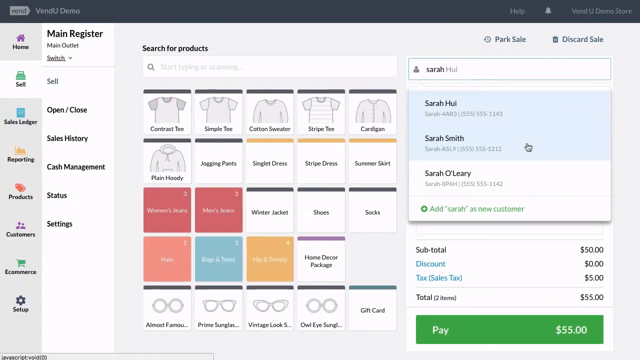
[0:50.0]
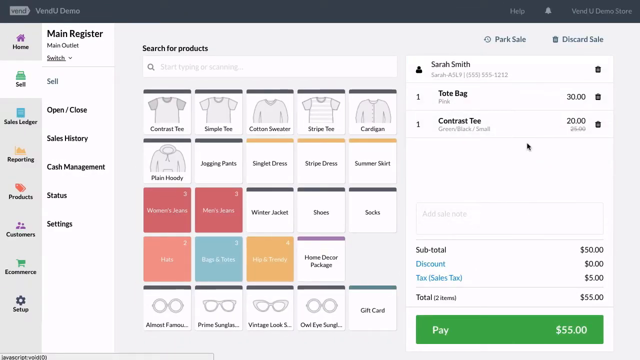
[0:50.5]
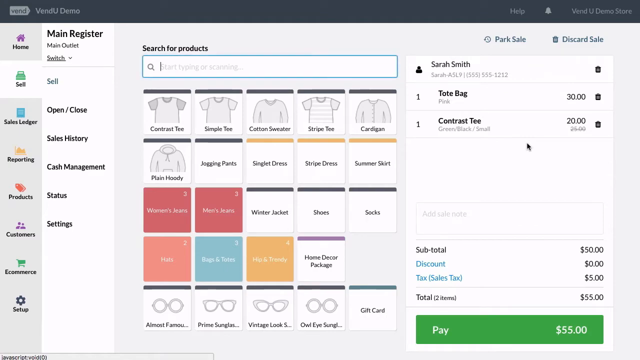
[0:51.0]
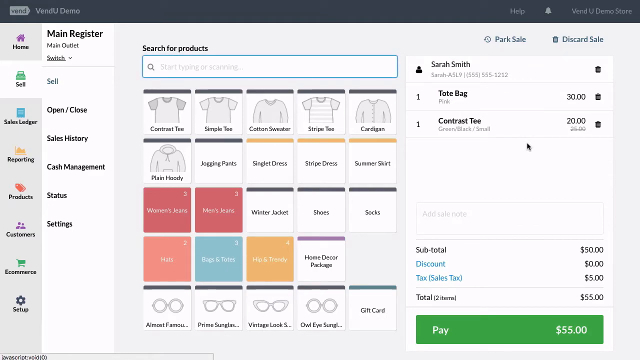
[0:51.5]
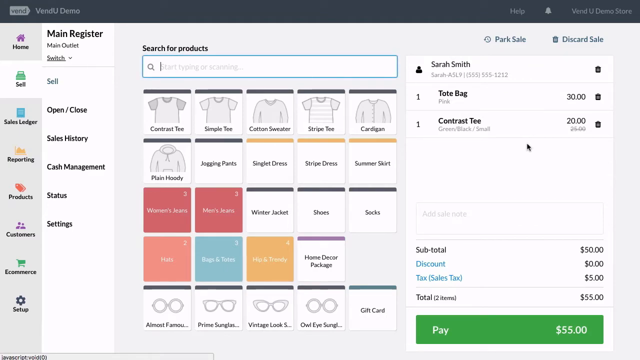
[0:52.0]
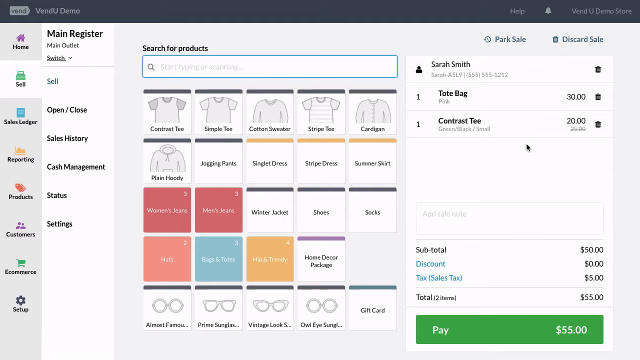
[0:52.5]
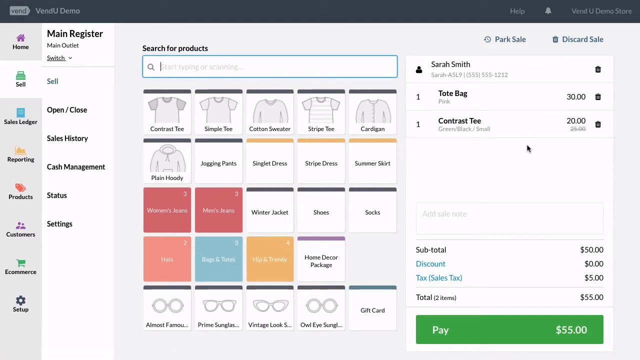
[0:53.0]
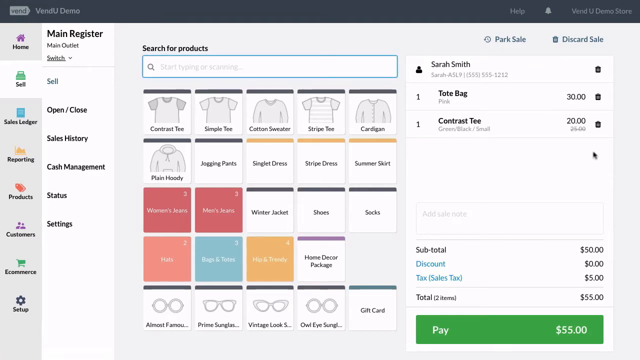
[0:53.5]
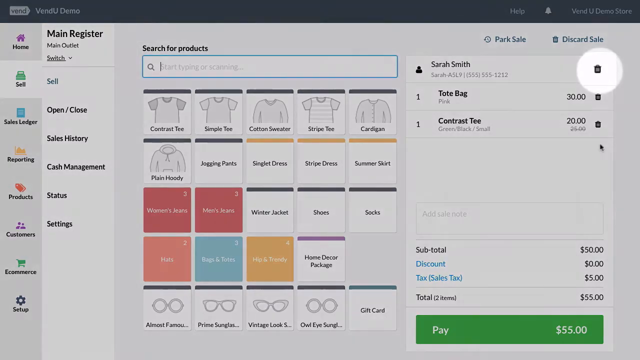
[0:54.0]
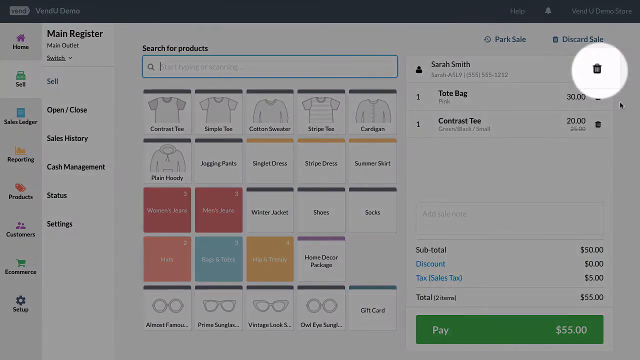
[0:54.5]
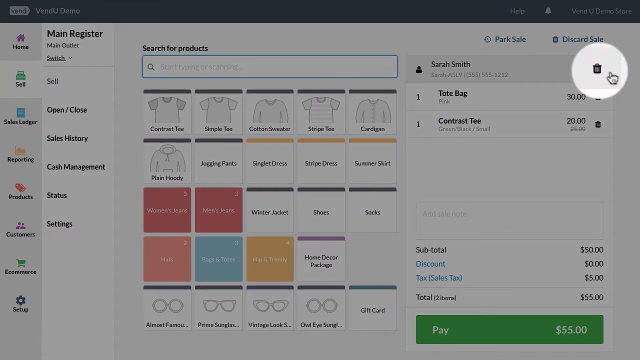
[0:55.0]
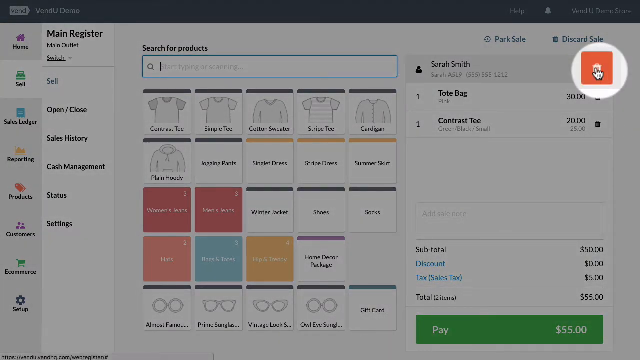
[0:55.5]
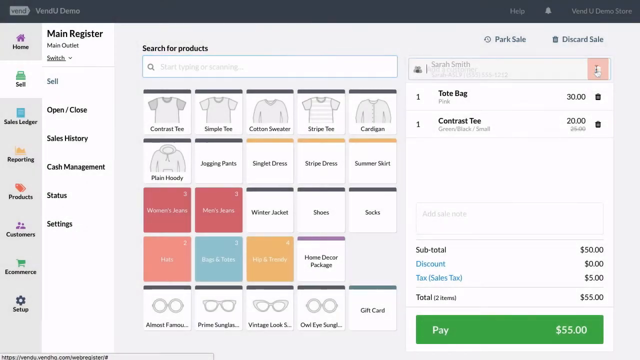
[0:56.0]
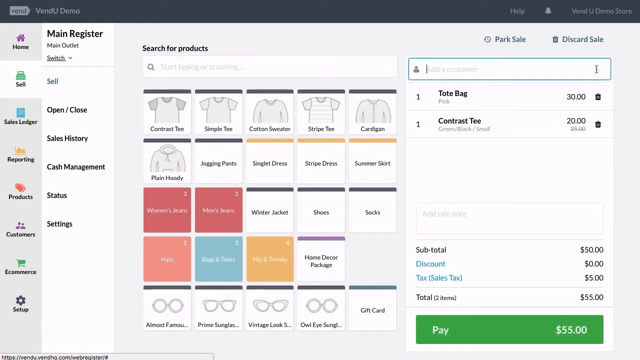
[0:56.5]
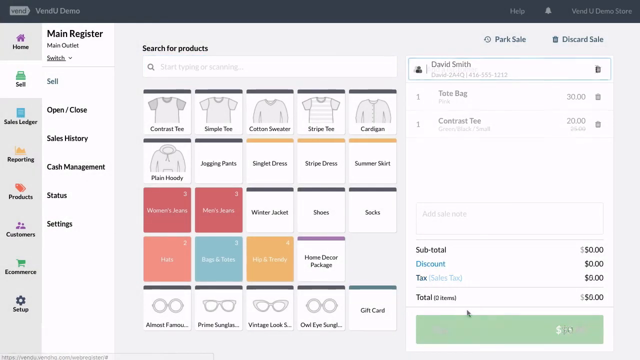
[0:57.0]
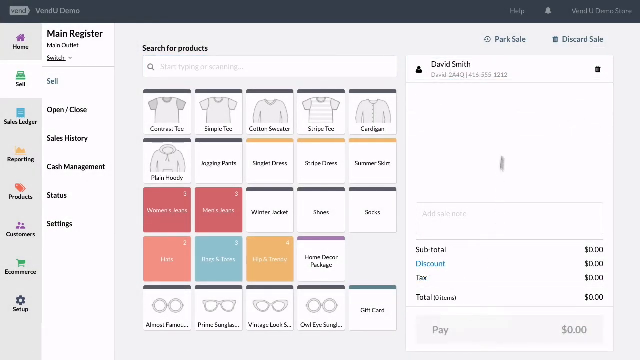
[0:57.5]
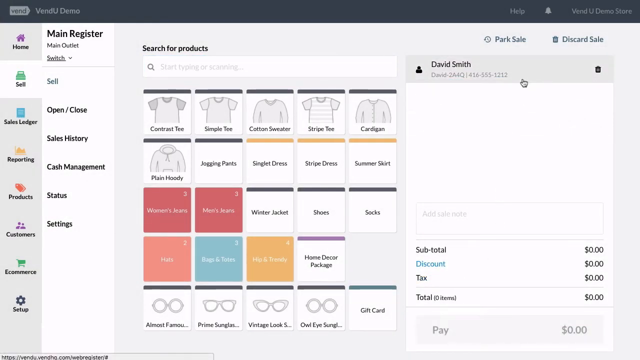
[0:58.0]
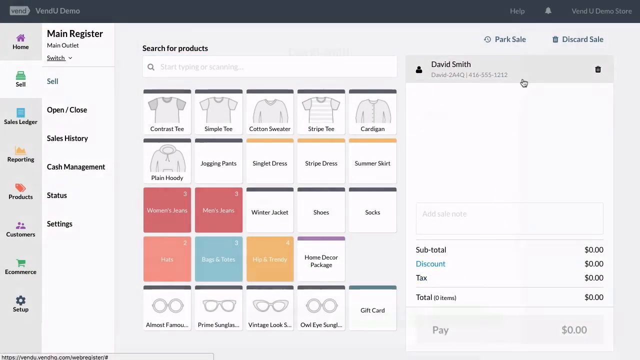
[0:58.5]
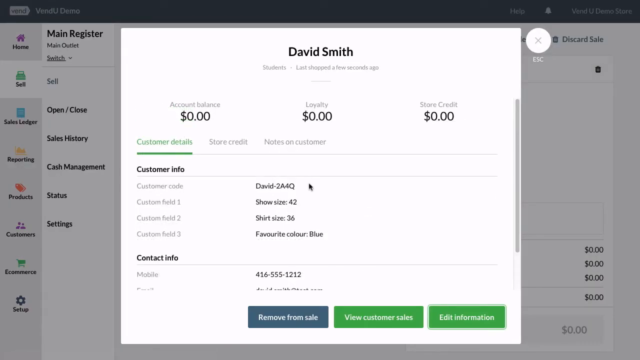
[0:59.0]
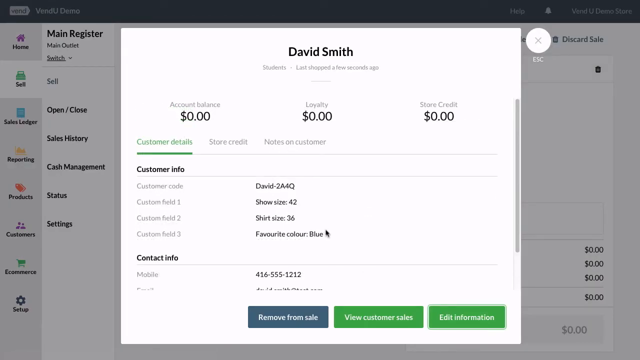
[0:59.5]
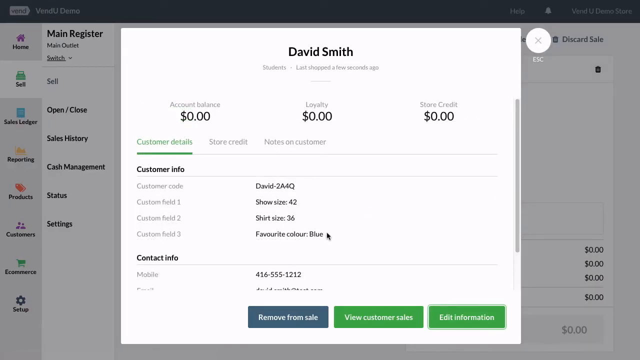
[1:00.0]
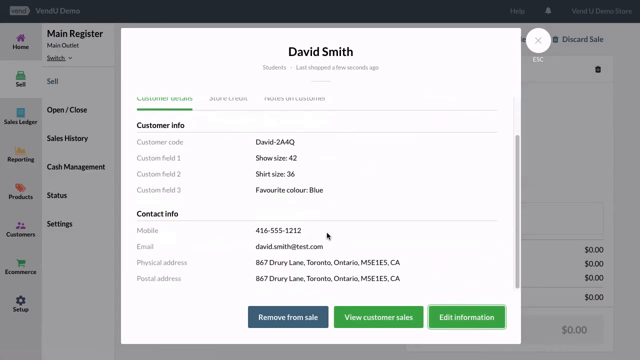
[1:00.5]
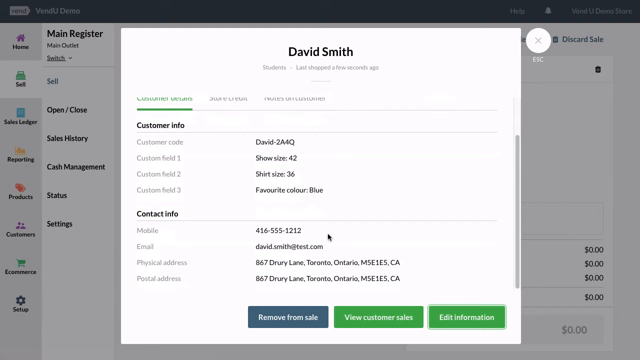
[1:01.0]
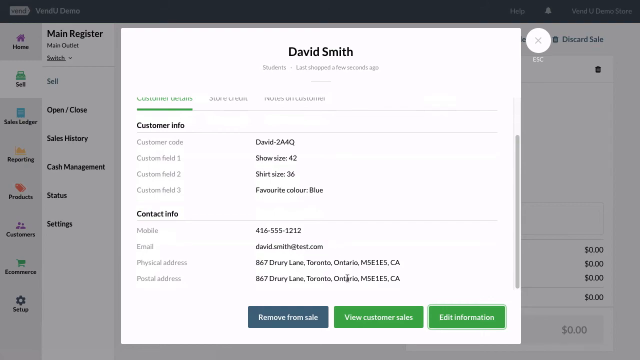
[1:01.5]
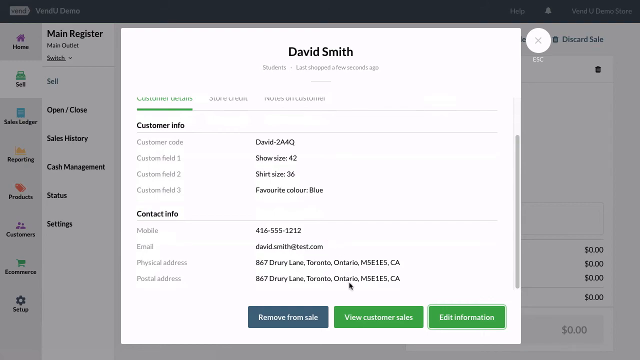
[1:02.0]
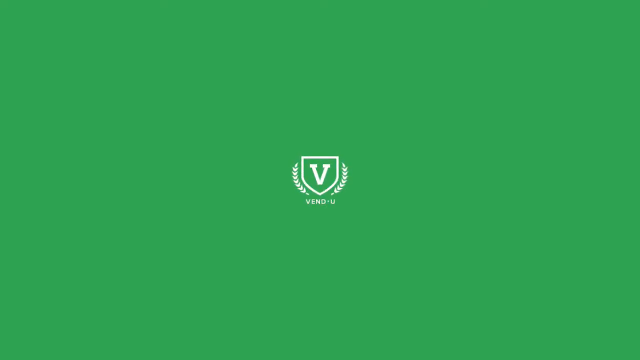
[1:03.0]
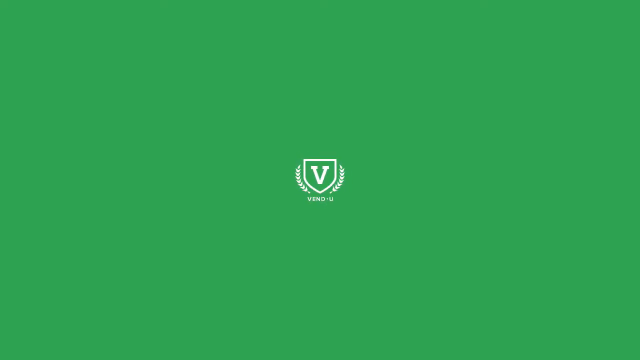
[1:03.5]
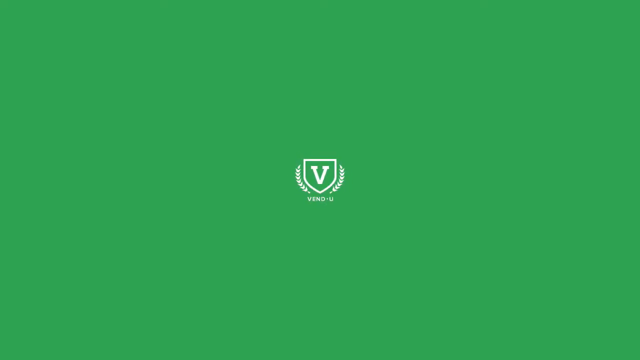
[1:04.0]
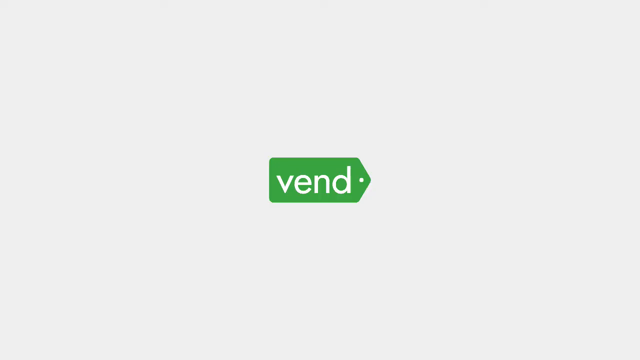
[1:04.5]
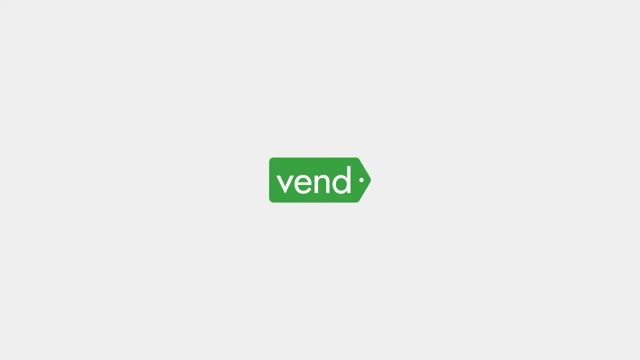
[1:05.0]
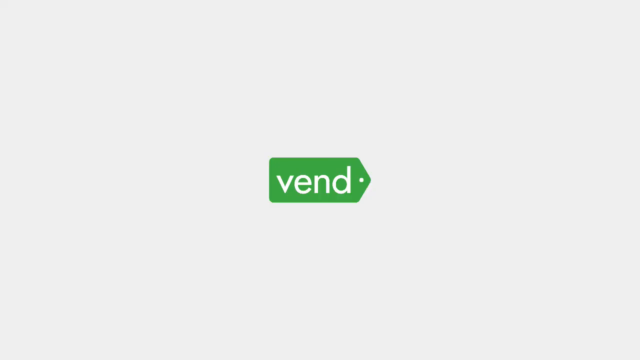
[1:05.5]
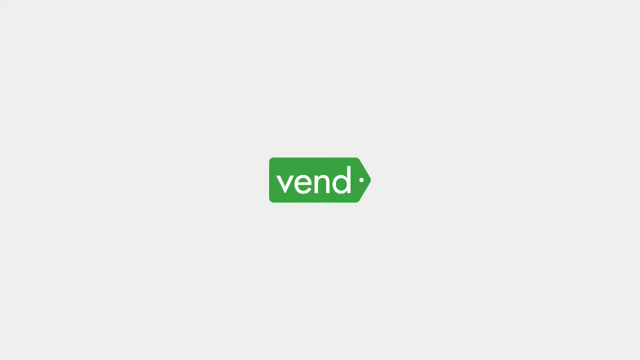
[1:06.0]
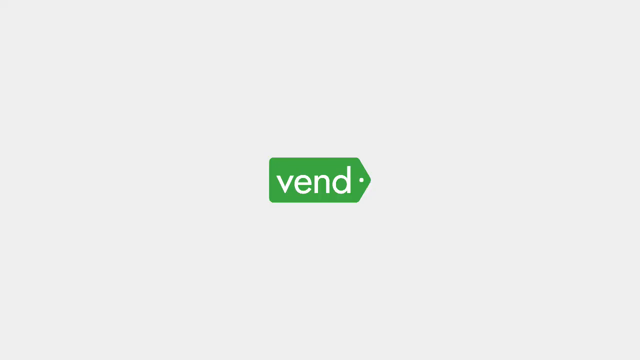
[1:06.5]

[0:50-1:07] After a click on the page, Sarah Smith's information is deleted. Daniel Smith is clicked, and Daniel Smith's name and information come up and are added to the page, shown inside a box. The page is white with blue buttons at the top. On the right is the main register for the company, along with Park Sale and Discard Sale buttons that pop up. On the right side of the page are the names Sarah Smith, Sarah O'Hare and Sarah Hay. In the middle are boxes with things written on them.